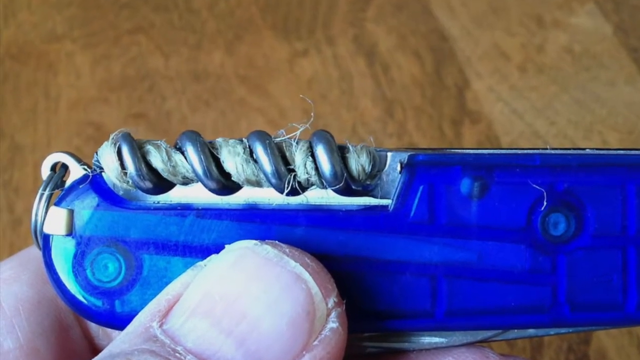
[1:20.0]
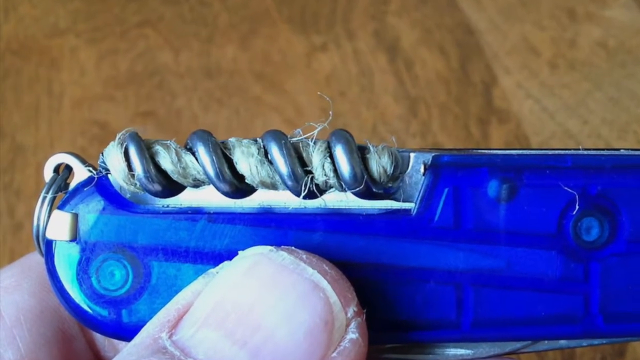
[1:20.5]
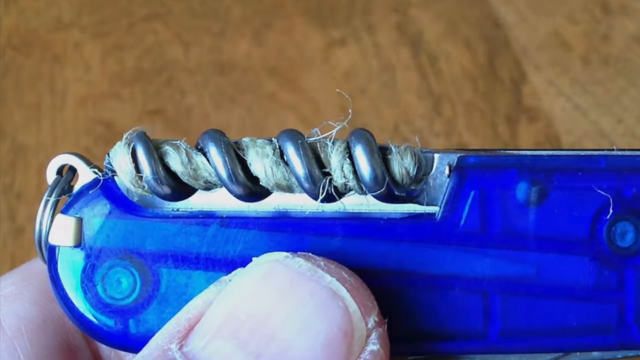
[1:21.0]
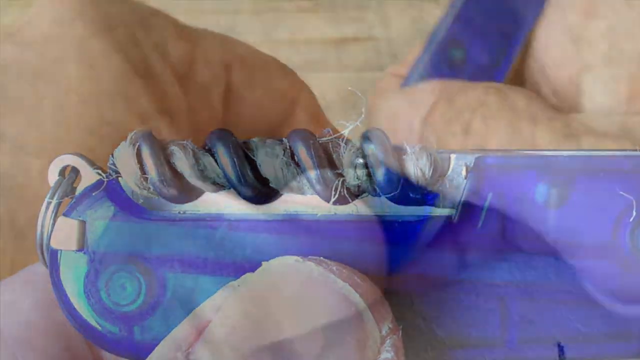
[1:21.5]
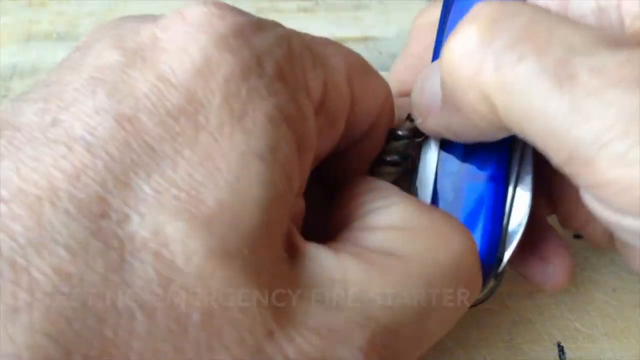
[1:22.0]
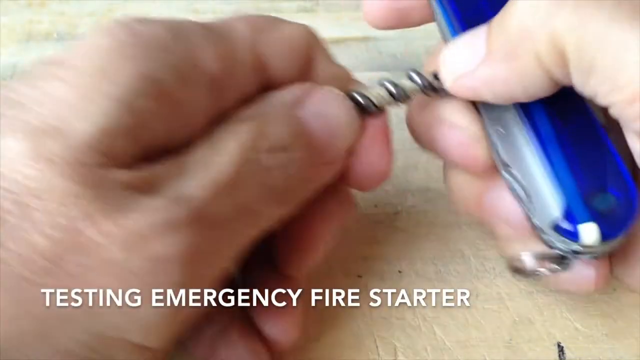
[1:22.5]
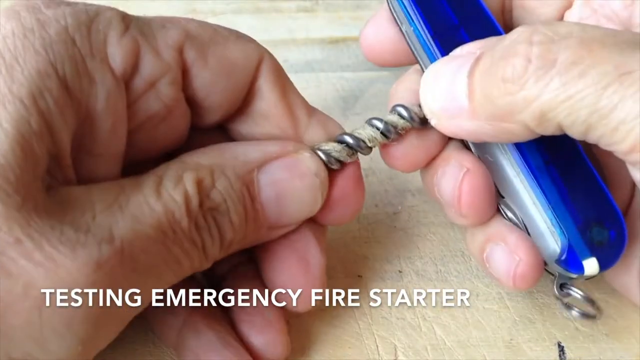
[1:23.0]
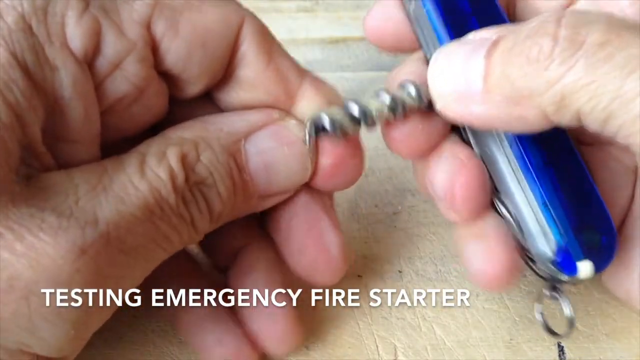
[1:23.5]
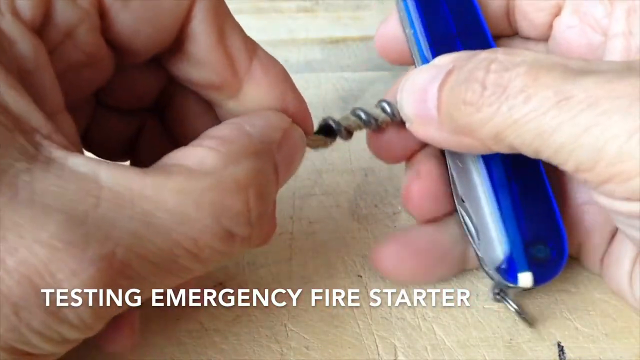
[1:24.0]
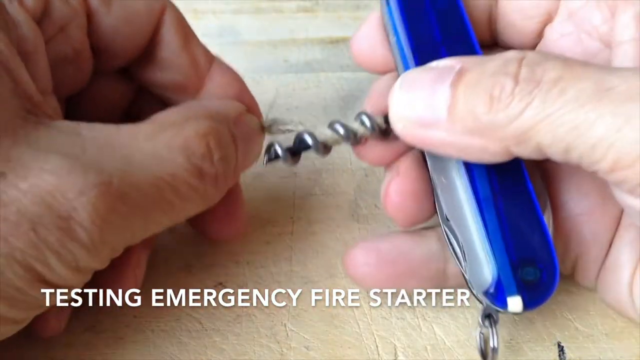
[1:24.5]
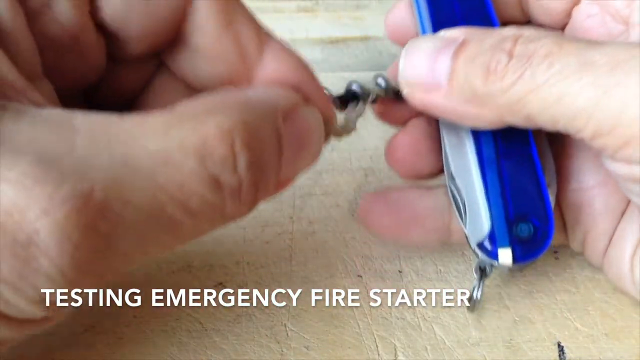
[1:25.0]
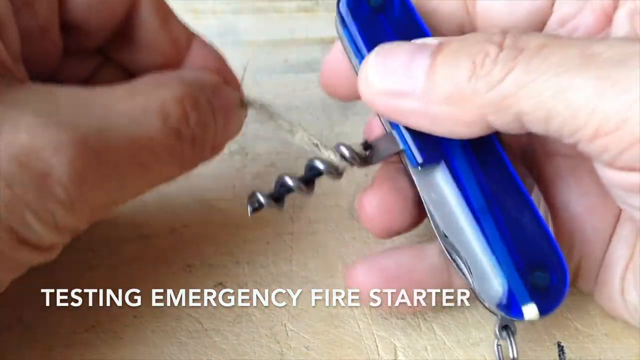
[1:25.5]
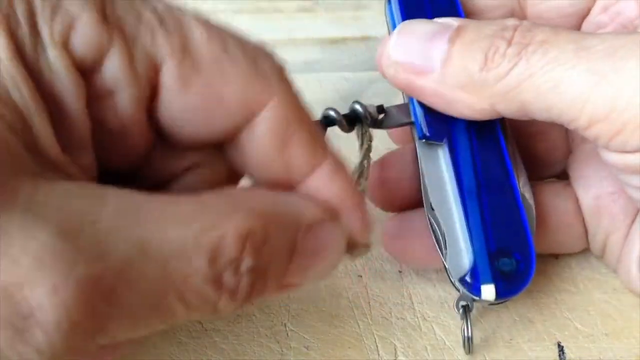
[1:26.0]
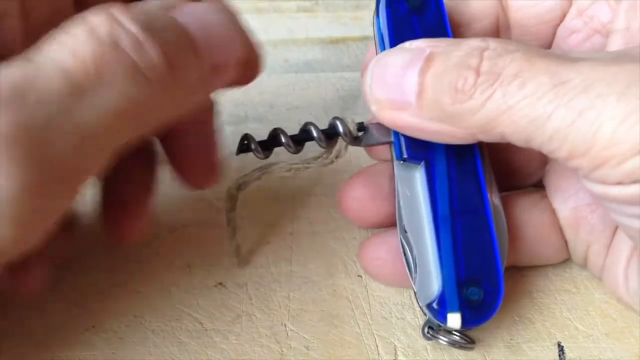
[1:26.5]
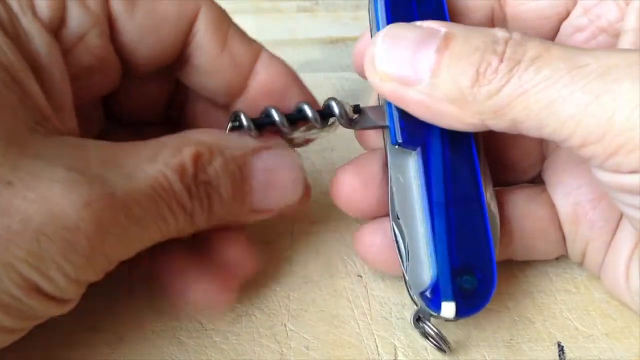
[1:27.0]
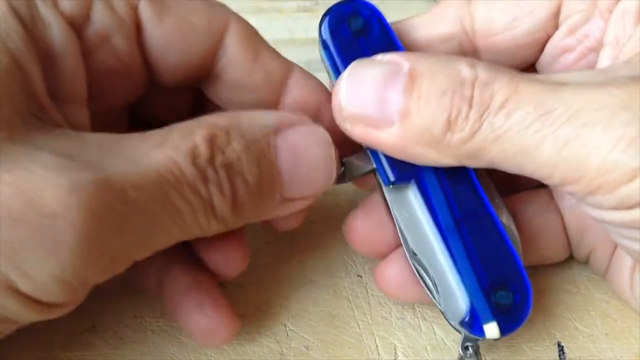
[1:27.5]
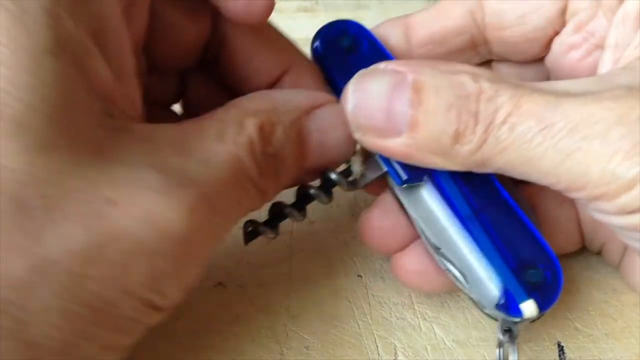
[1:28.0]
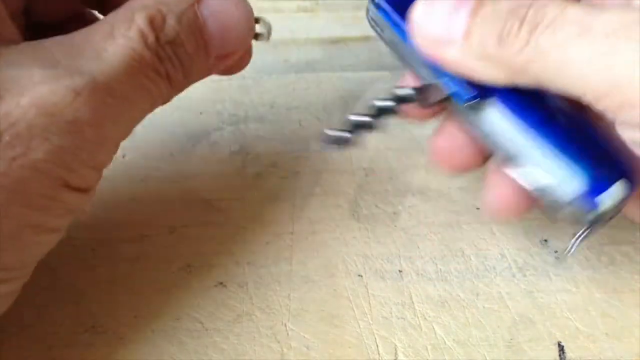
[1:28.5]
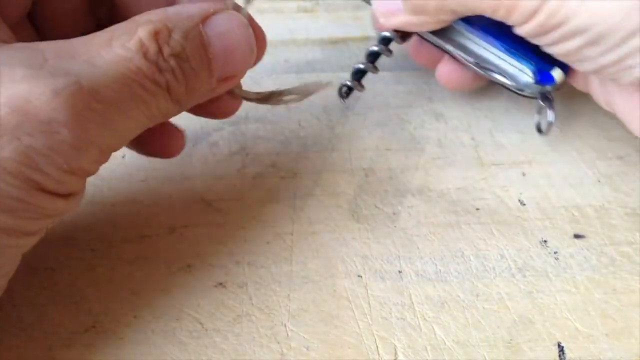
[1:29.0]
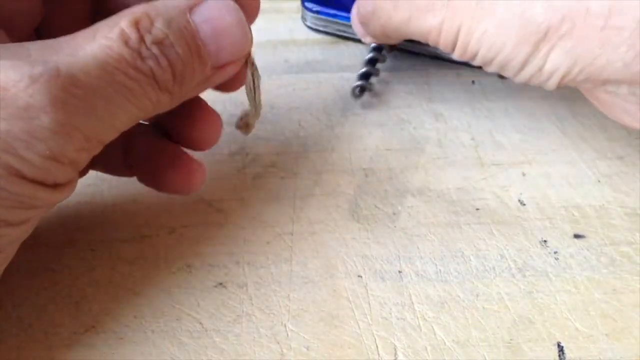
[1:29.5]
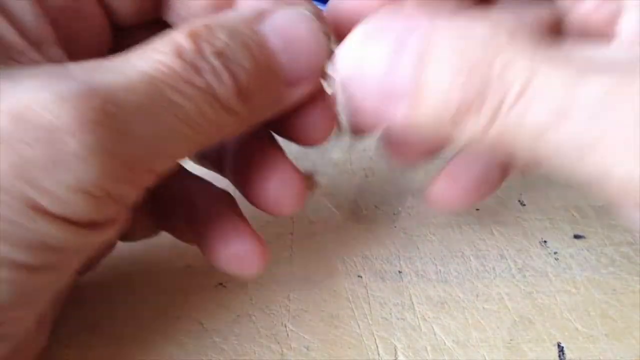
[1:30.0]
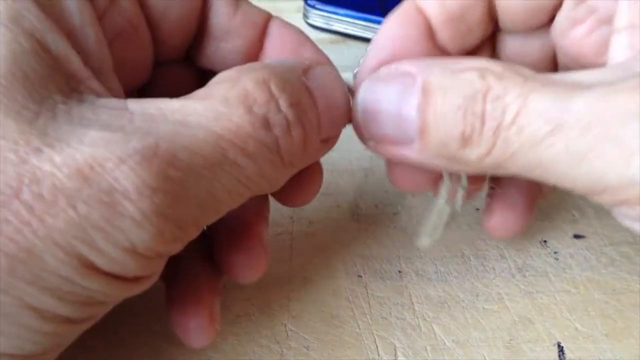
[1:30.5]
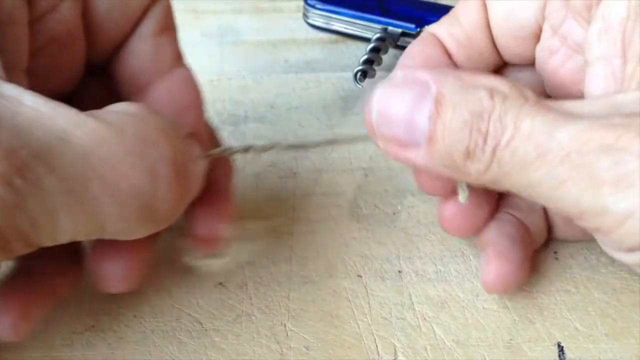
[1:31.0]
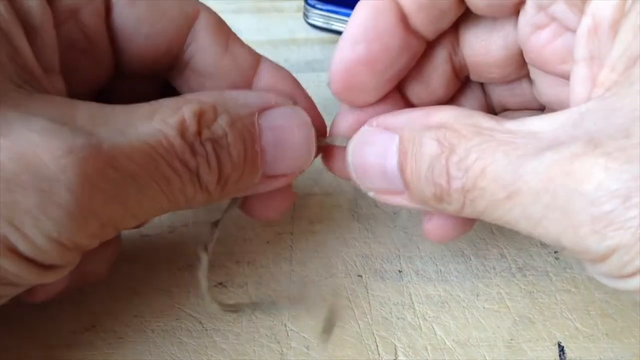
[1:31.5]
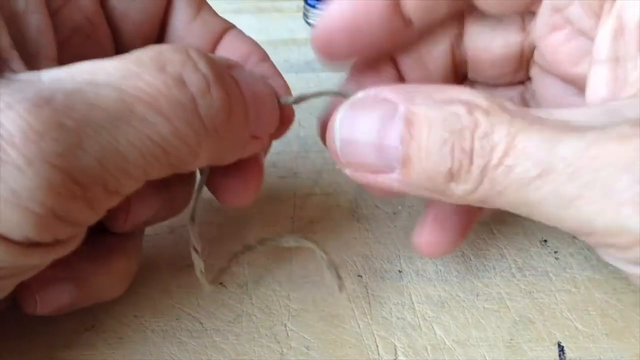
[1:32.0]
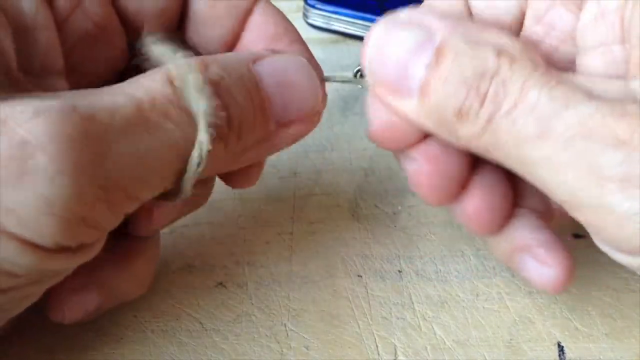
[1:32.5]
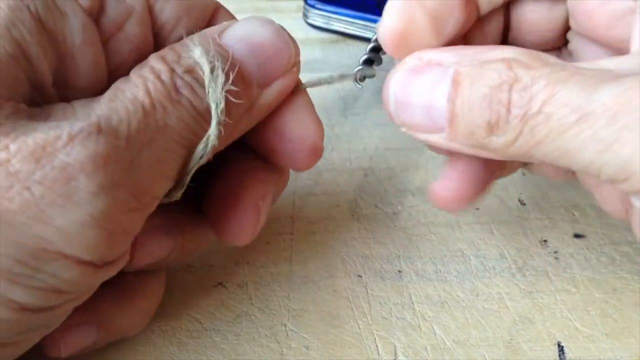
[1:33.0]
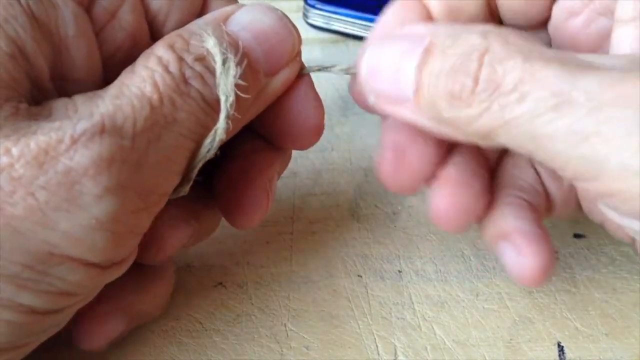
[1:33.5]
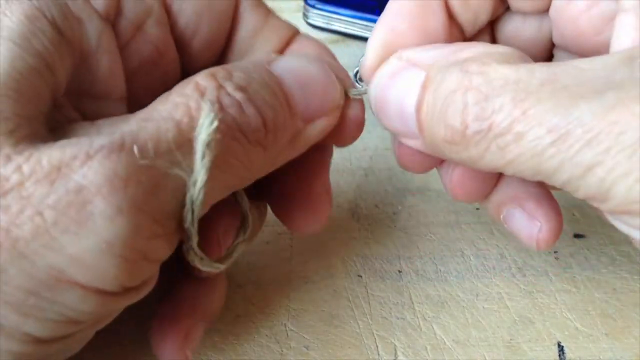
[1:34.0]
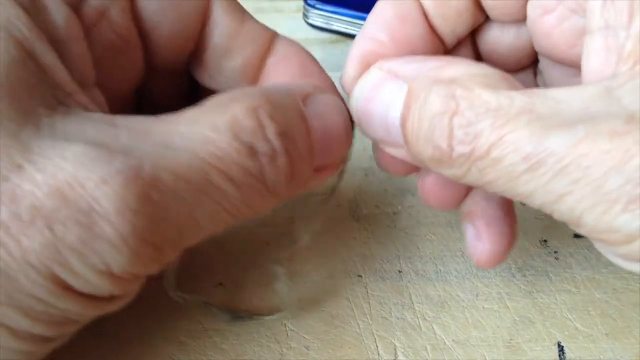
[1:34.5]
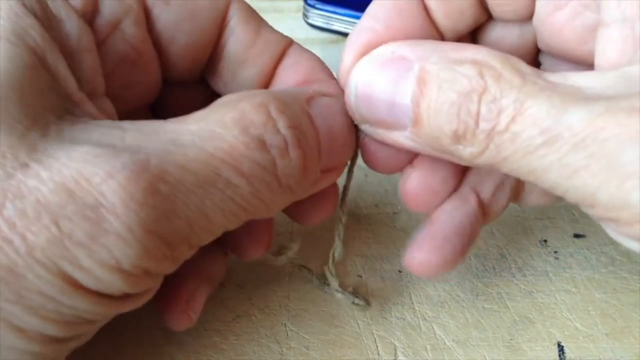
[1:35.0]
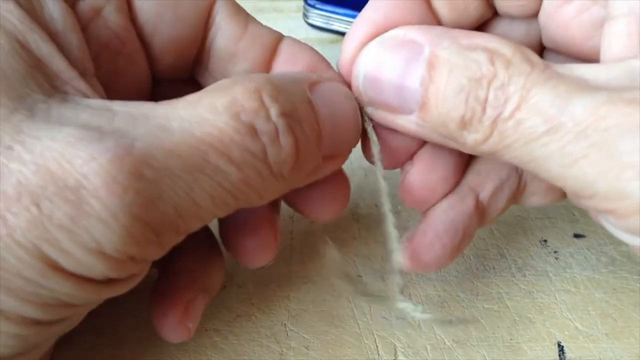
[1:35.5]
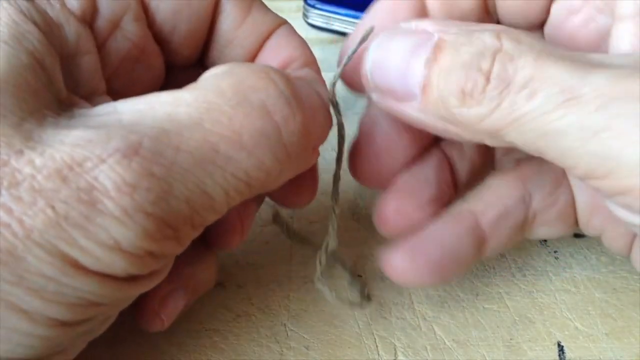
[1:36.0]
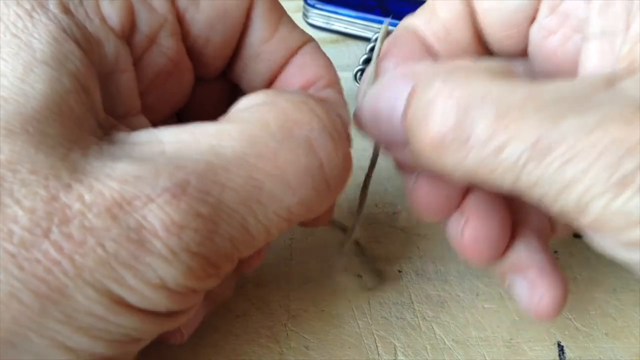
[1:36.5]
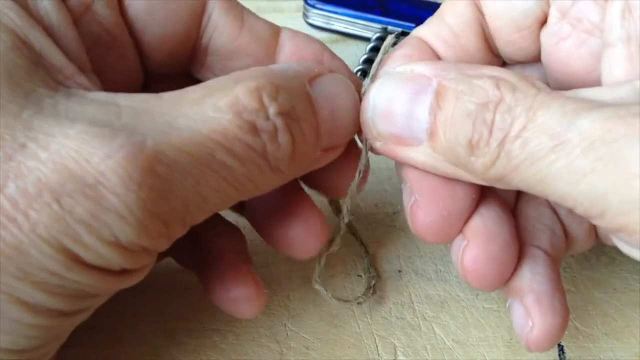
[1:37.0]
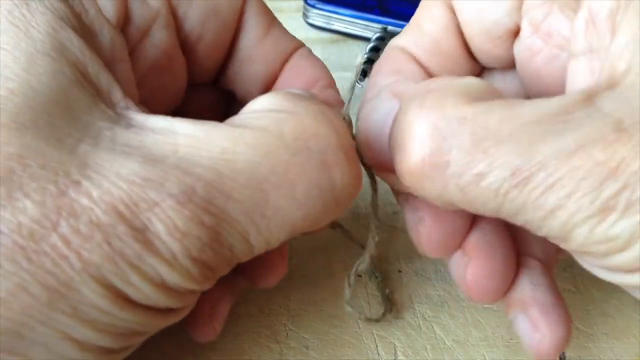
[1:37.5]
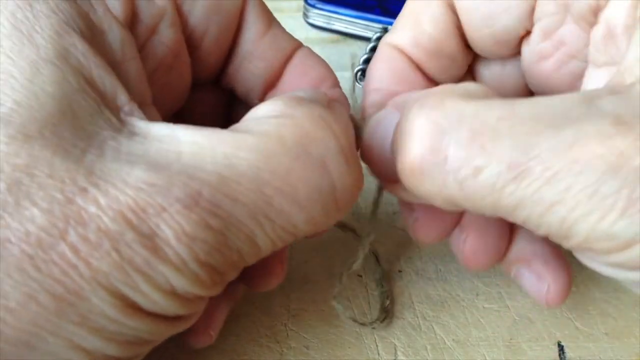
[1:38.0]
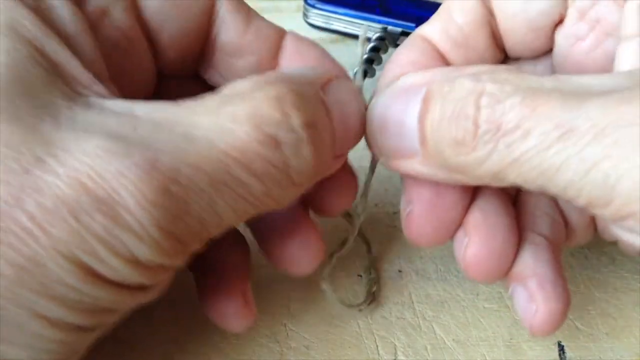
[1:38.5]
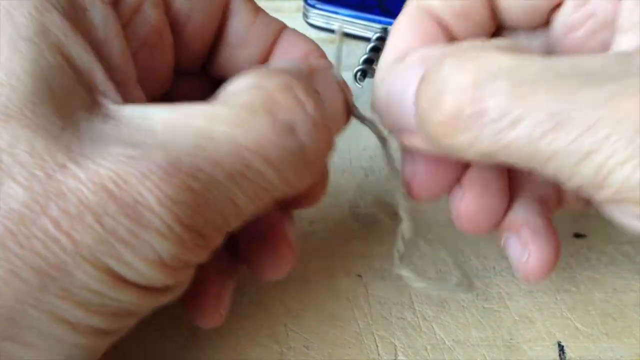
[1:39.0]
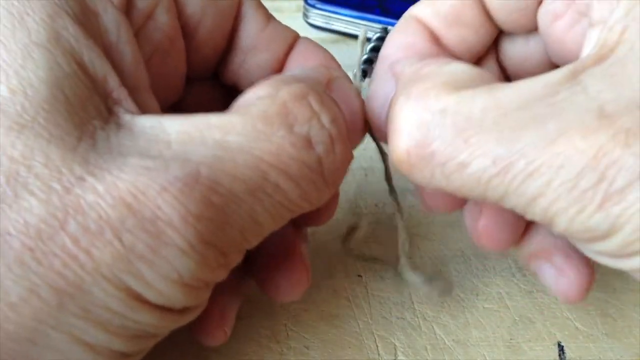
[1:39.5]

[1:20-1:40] The old man takes the piece of yarn off the corkscrew, apparently to test the emergency fire starter he made himself. After taking off the yarn, he seems to take the glue off it. The background has changed: the wood is a little lighter and the light is a little brighter than before, so the man is possibly in another room of his house.